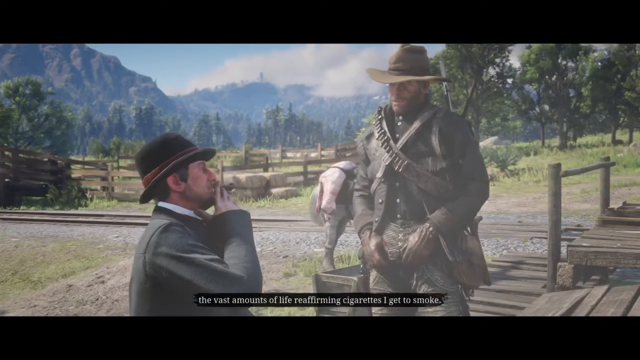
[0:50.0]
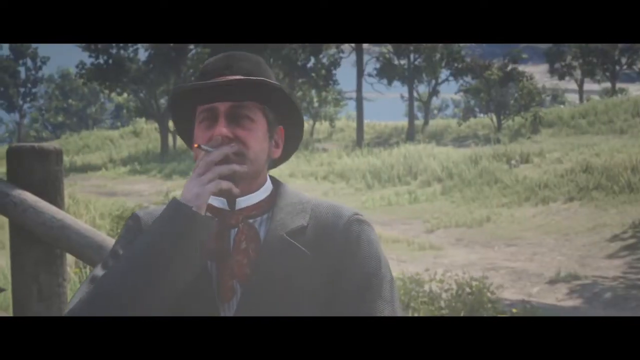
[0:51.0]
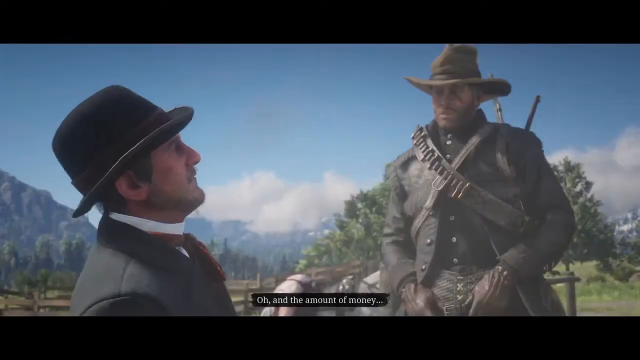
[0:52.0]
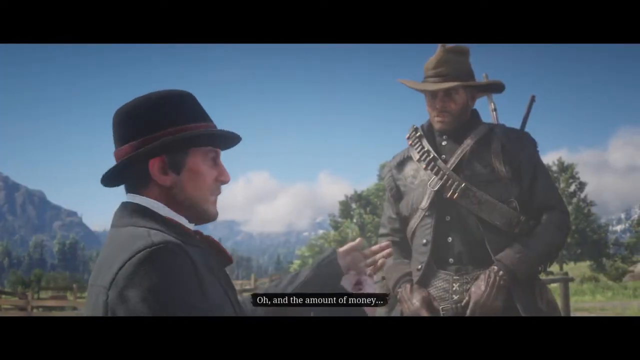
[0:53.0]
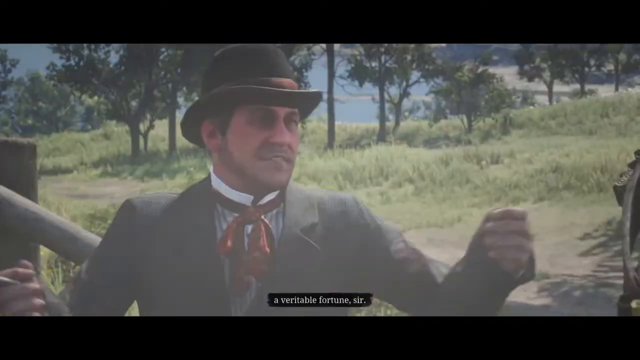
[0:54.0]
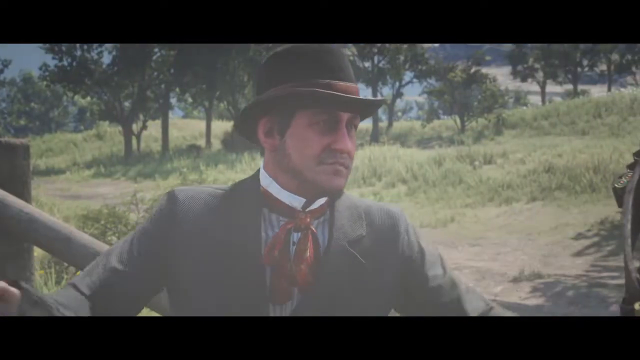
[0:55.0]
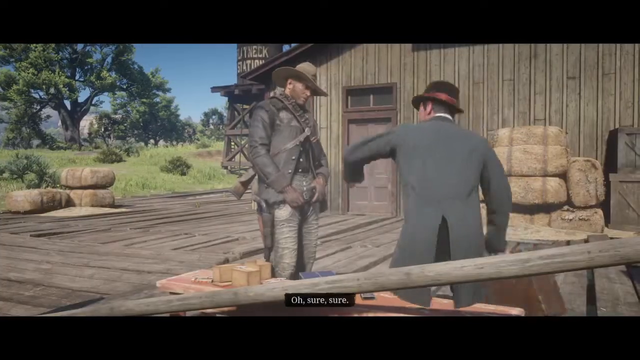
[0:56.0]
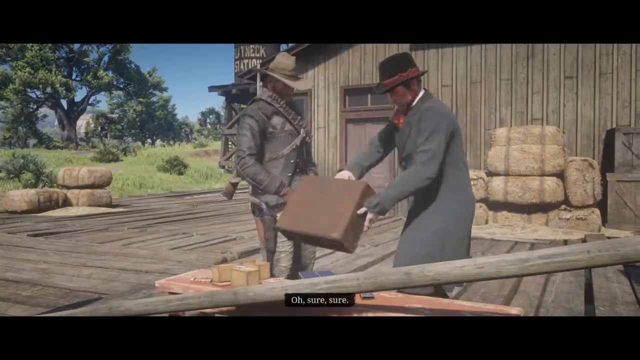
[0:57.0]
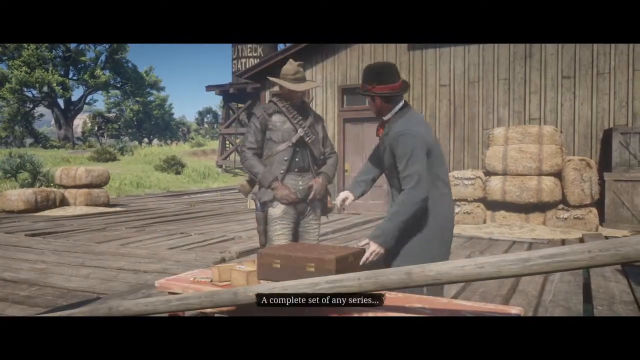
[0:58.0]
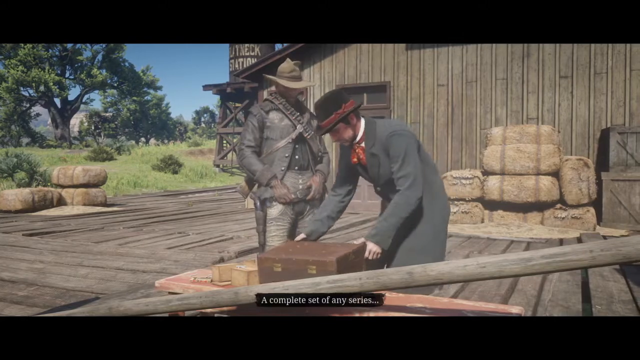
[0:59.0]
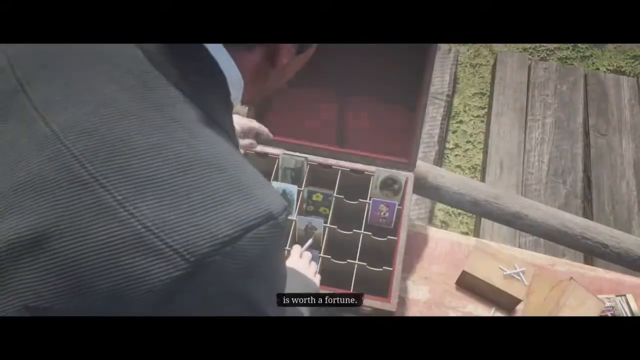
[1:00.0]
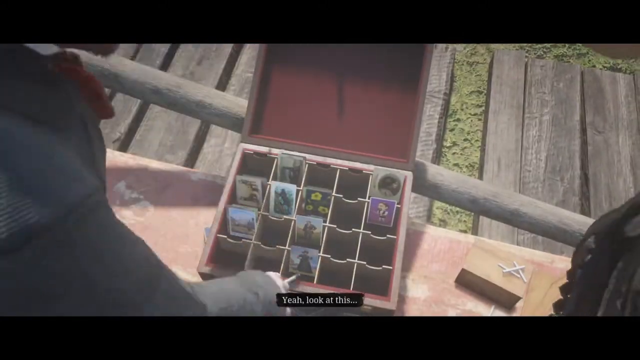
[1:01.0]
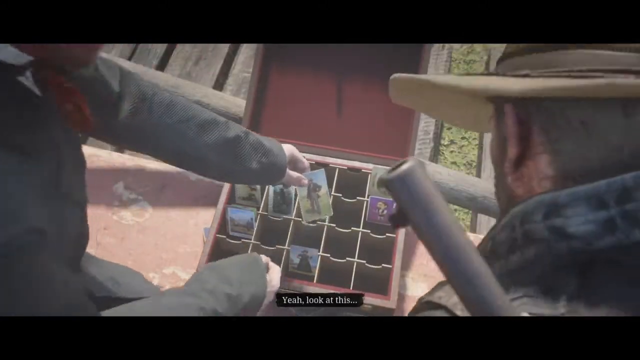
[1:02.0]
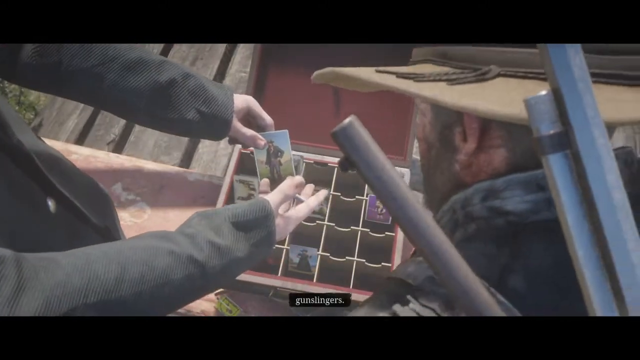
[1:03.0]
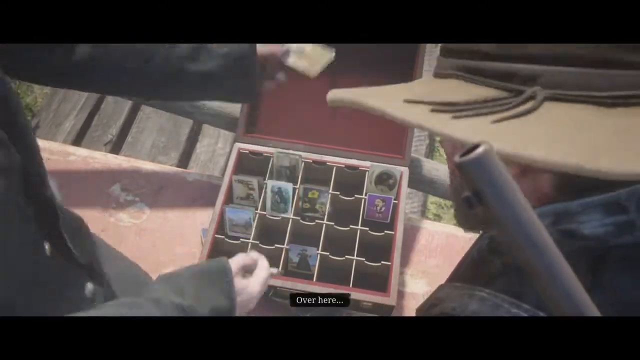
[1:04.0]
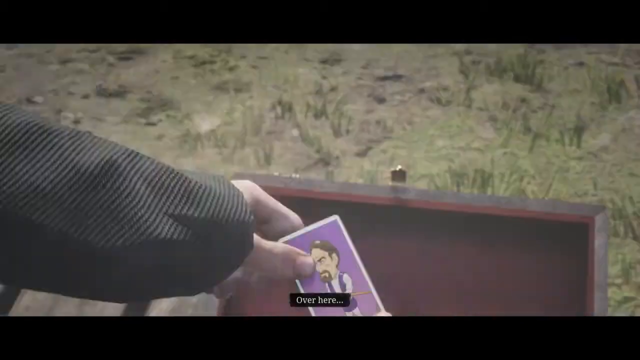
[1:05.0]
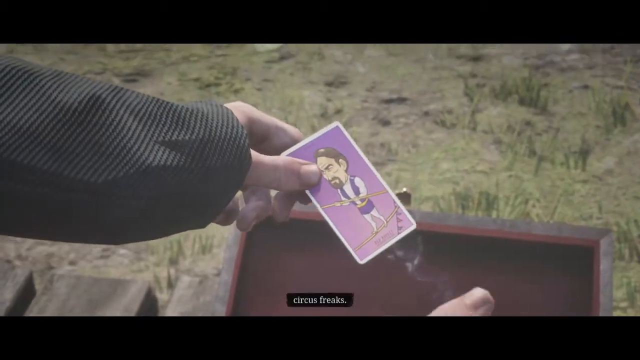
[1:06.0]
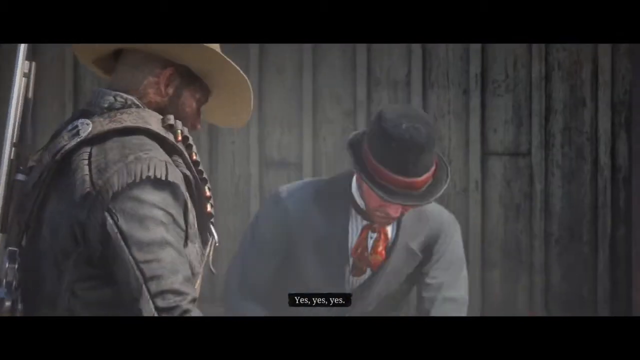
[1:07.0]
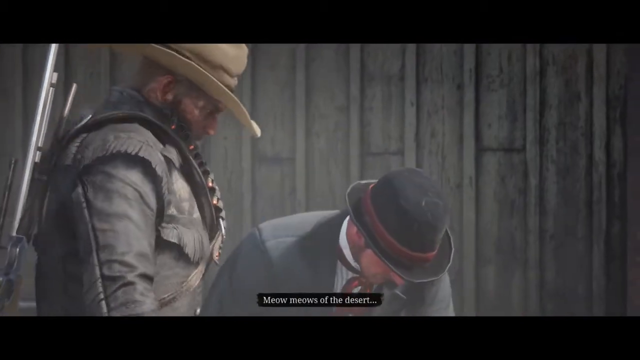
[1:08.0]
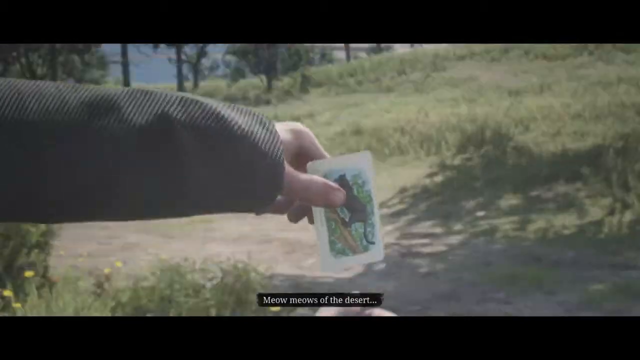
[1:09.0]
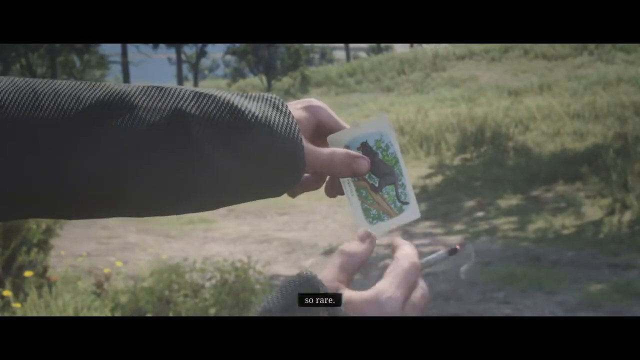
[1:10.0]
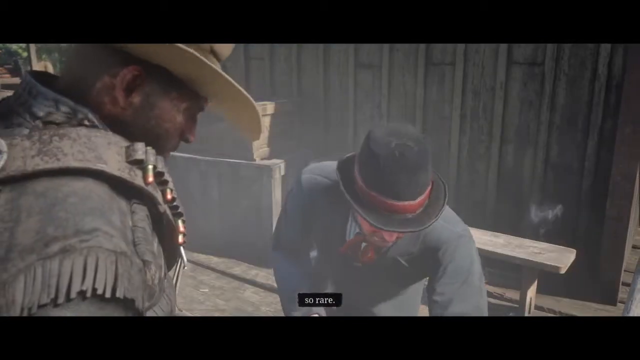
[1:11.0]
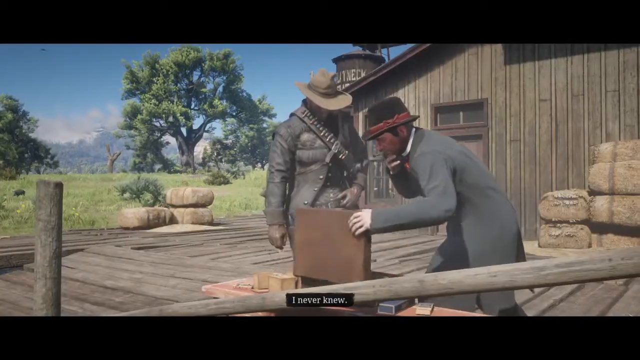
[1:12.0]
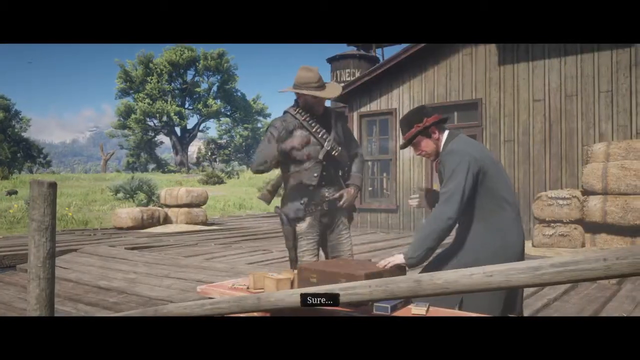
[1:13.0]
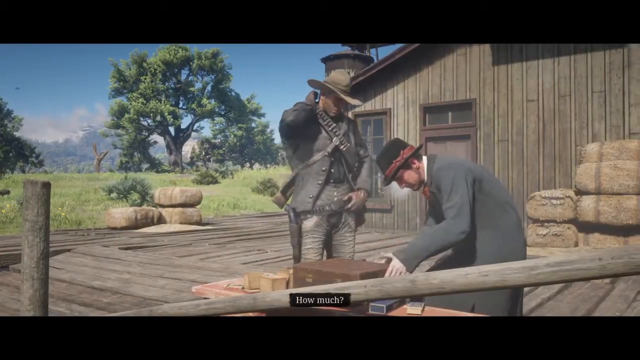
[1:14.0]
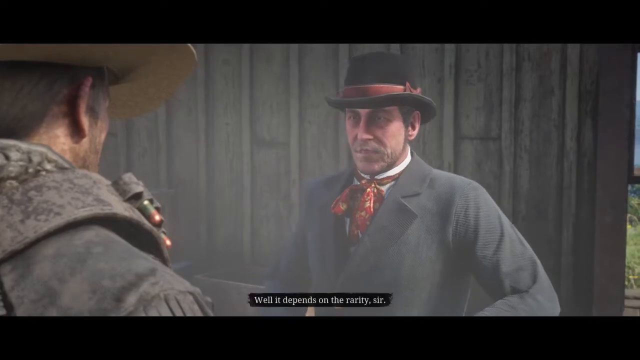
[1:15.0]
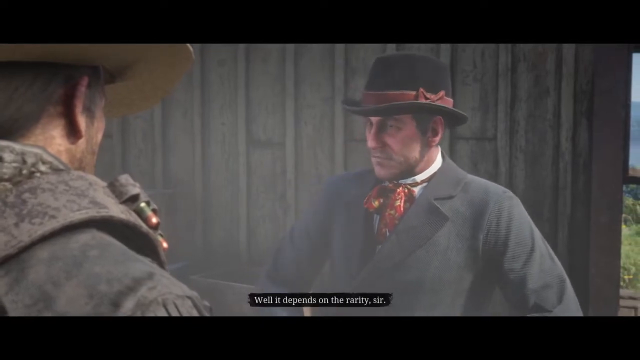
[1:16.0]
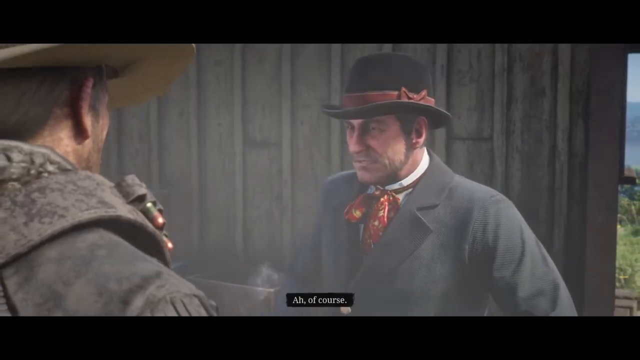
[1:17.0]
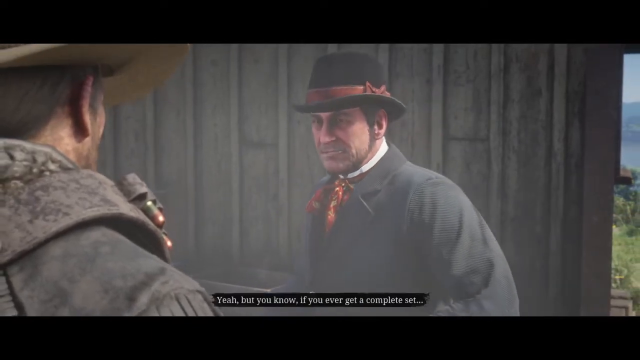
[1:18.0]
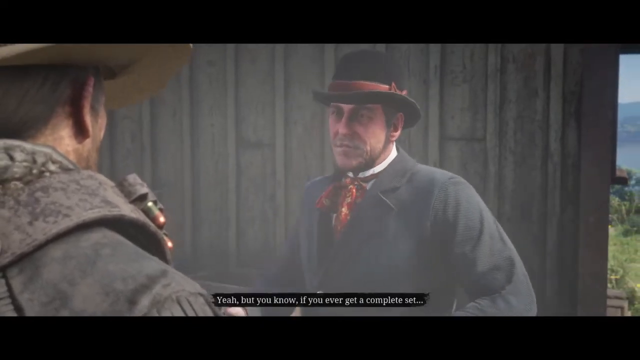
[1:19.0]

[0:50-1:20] The men are seen smoking cigarettes. There seems to be a horse waiting behind the man in the cowboy hat, possibly the one he rode up on. The man with the top hat opens a brown briefcase next to him, and different cigarette cards can be seen inside. He shows cards of gunslingers, circus freaks, and cats in the desert. Behind the man speaking is a wooden fence with some hay bales inside it.